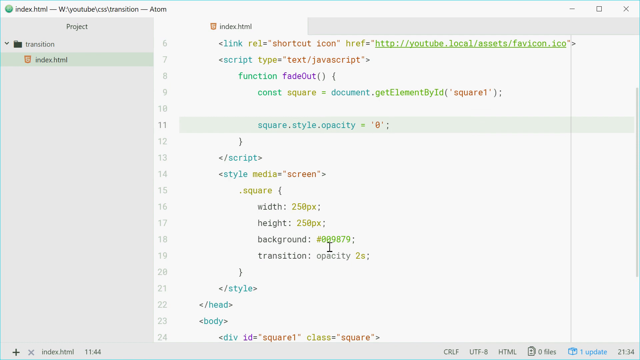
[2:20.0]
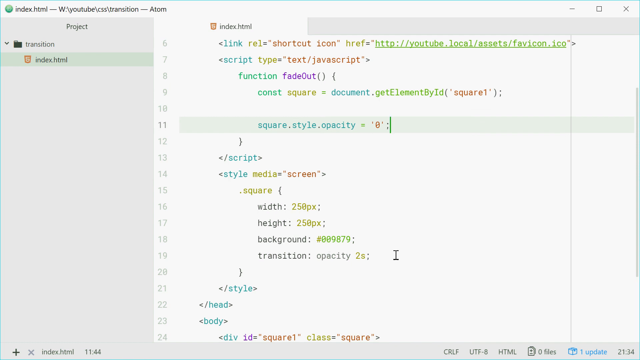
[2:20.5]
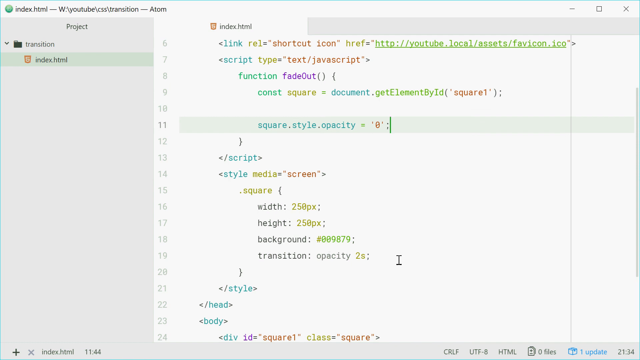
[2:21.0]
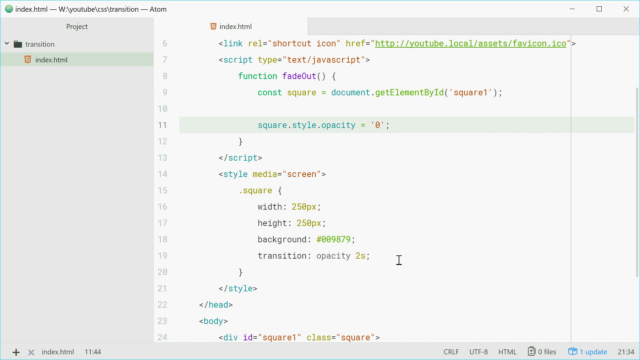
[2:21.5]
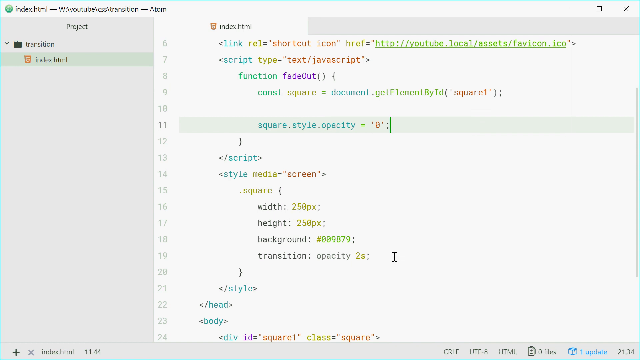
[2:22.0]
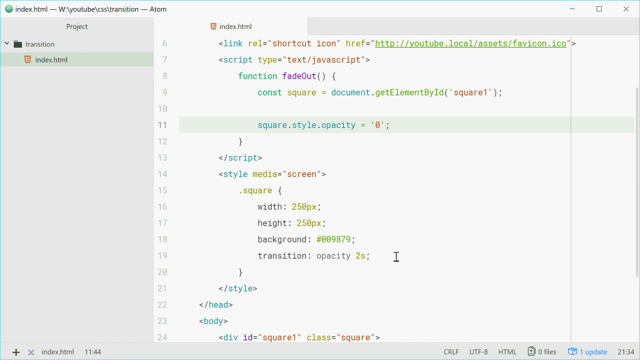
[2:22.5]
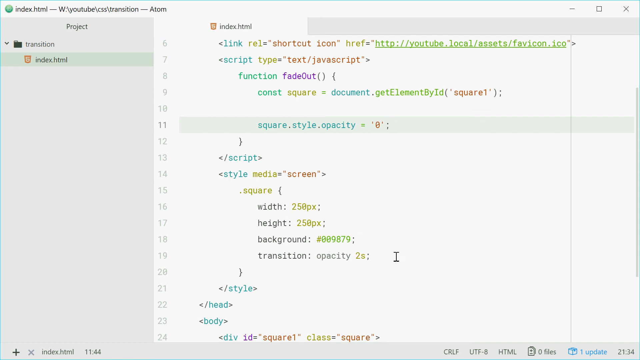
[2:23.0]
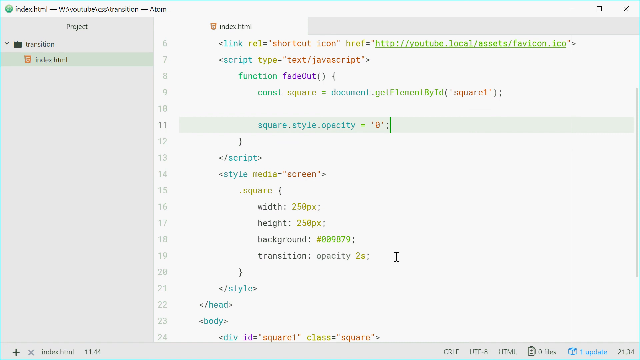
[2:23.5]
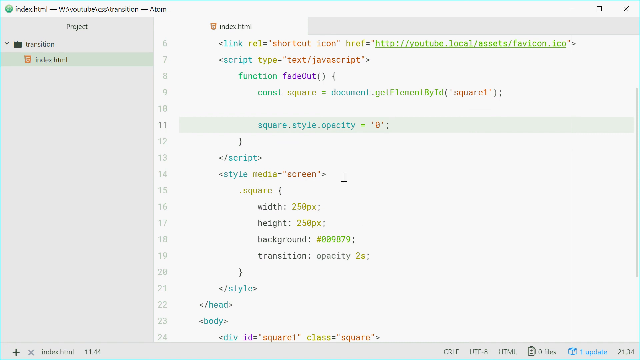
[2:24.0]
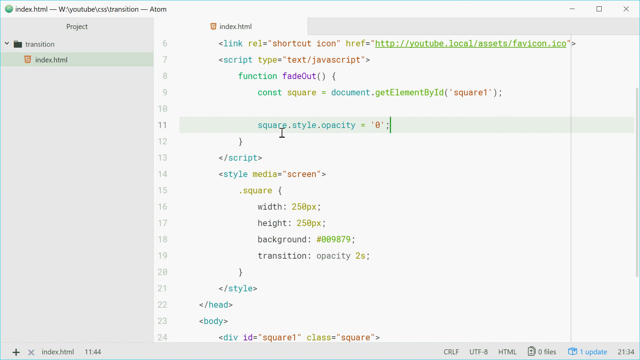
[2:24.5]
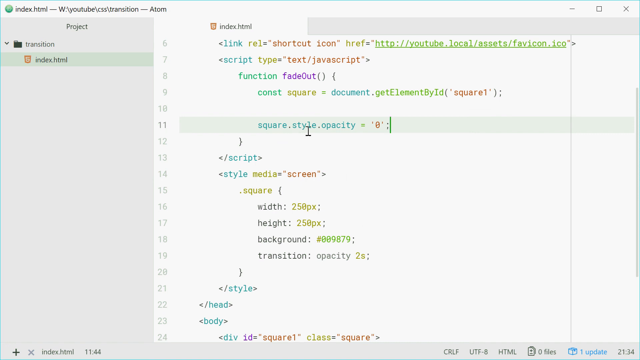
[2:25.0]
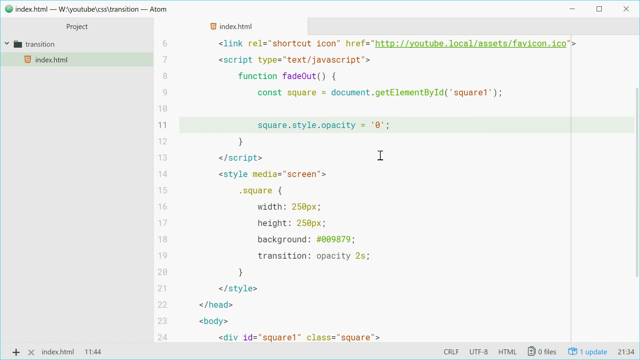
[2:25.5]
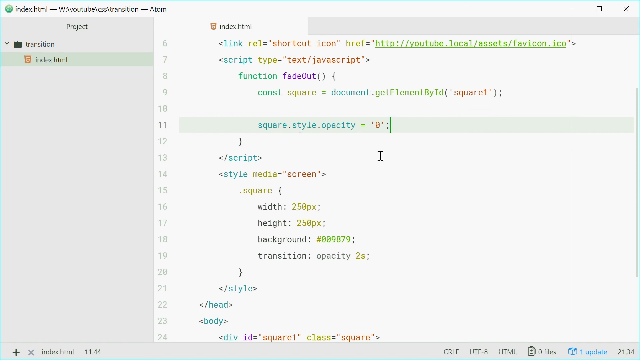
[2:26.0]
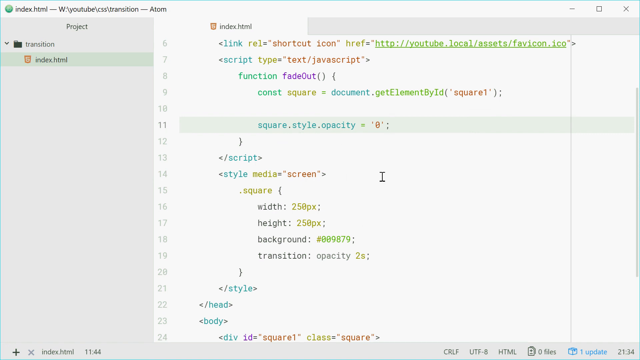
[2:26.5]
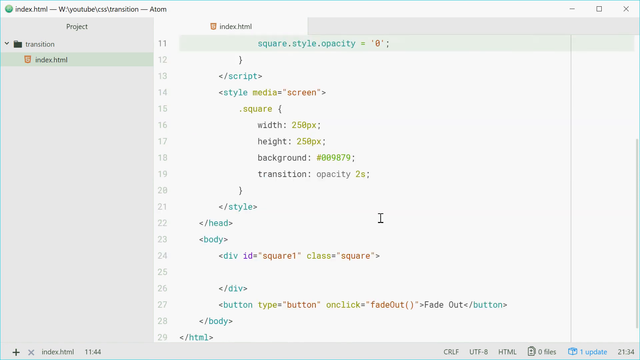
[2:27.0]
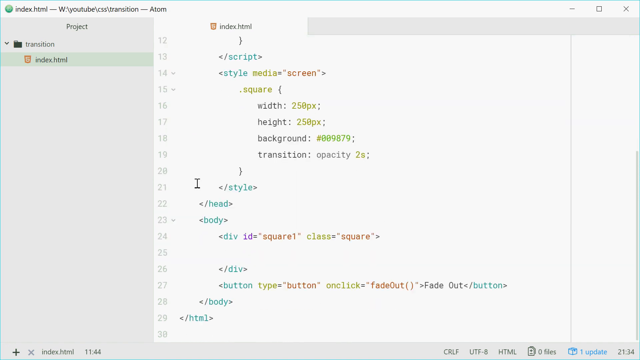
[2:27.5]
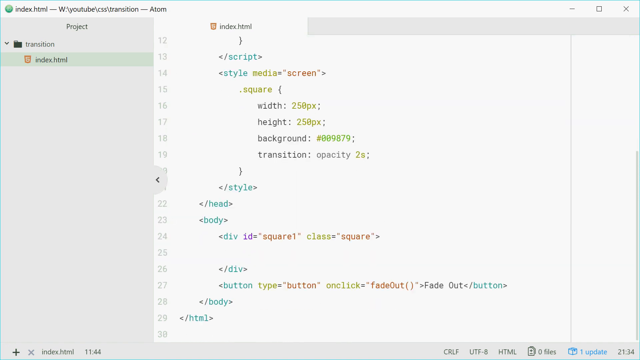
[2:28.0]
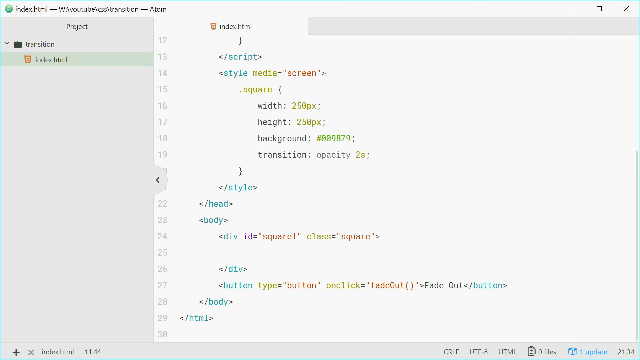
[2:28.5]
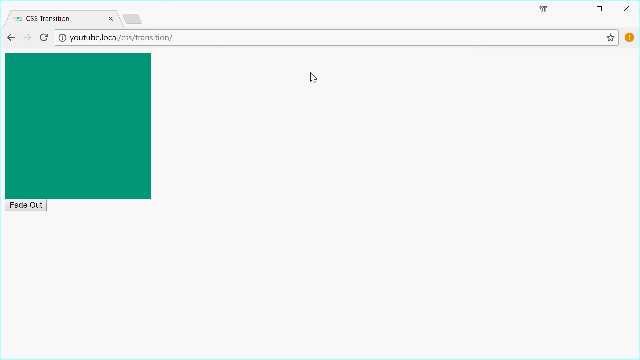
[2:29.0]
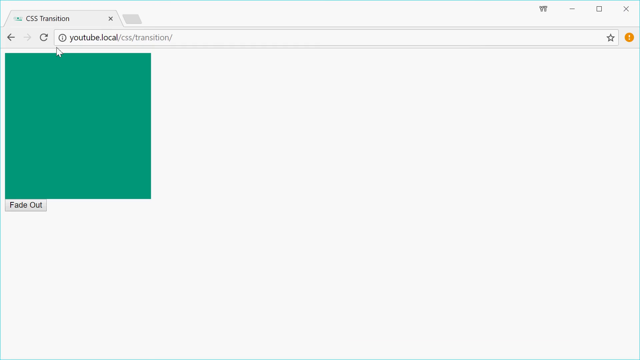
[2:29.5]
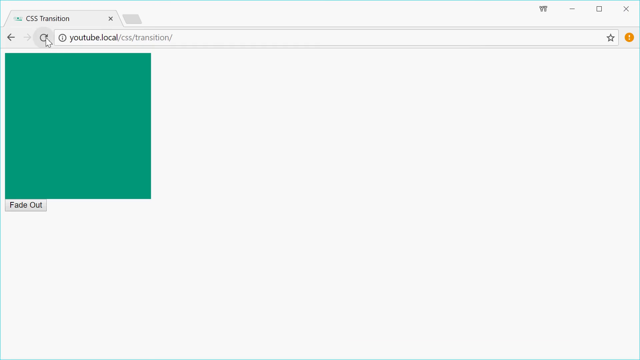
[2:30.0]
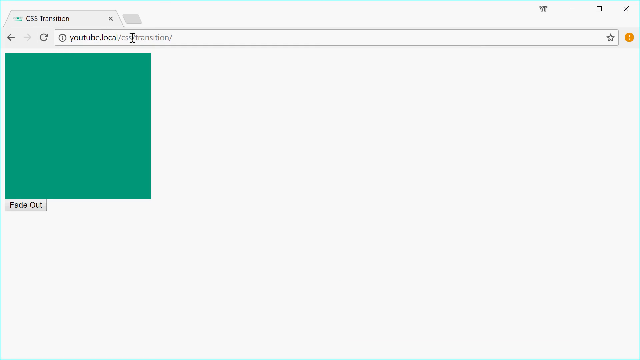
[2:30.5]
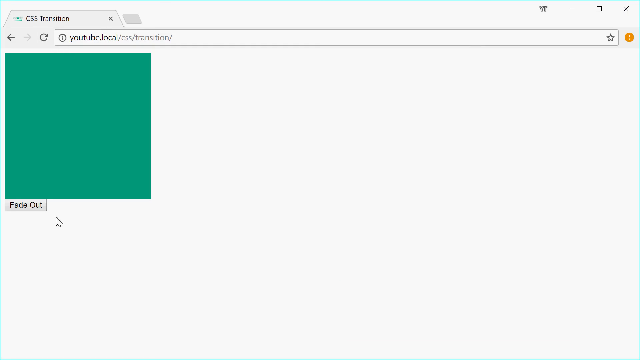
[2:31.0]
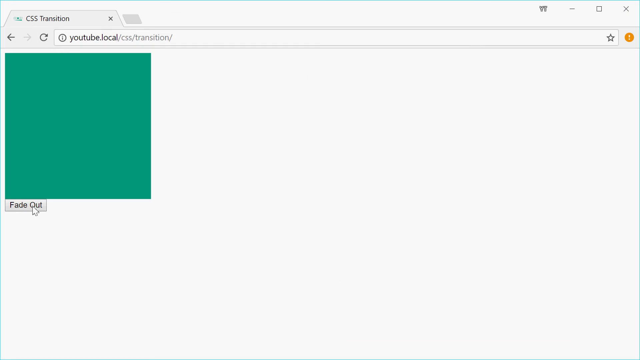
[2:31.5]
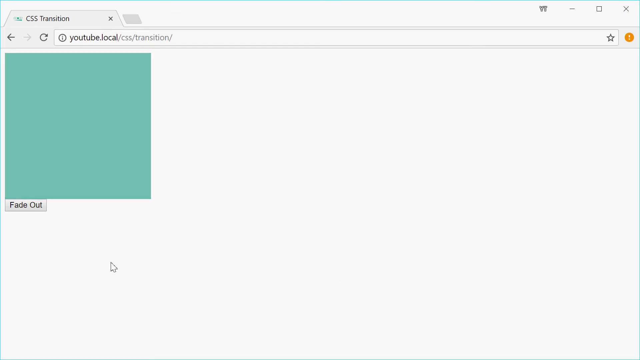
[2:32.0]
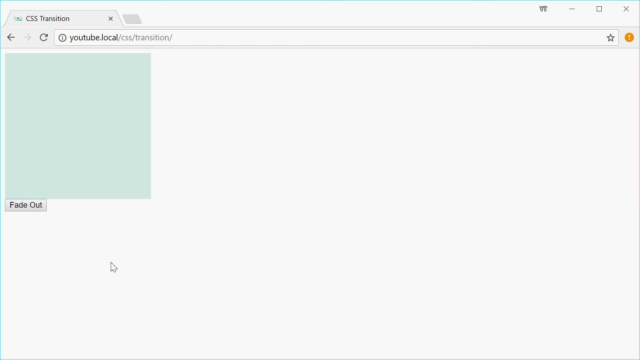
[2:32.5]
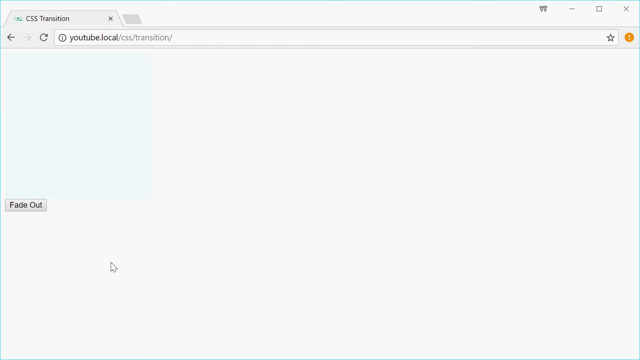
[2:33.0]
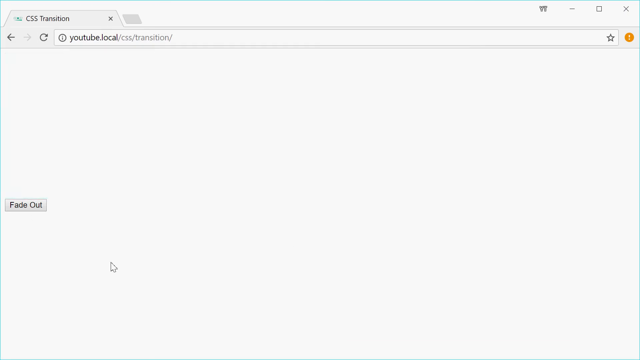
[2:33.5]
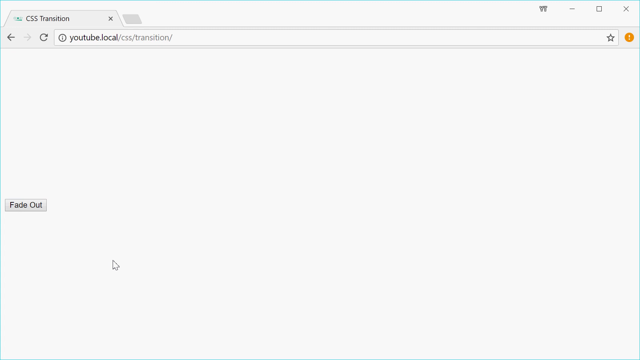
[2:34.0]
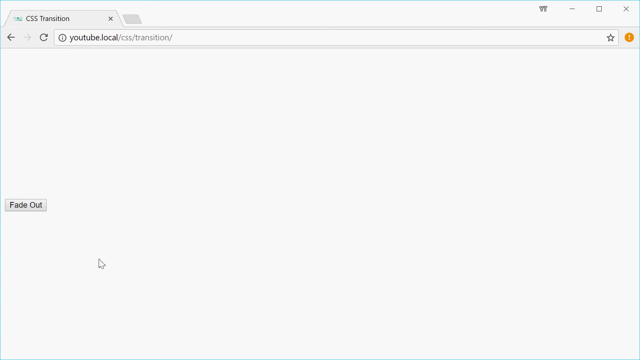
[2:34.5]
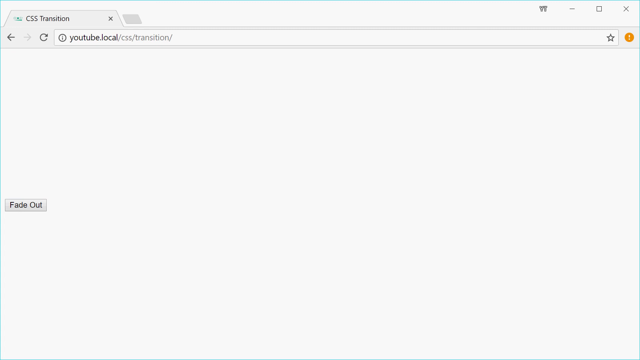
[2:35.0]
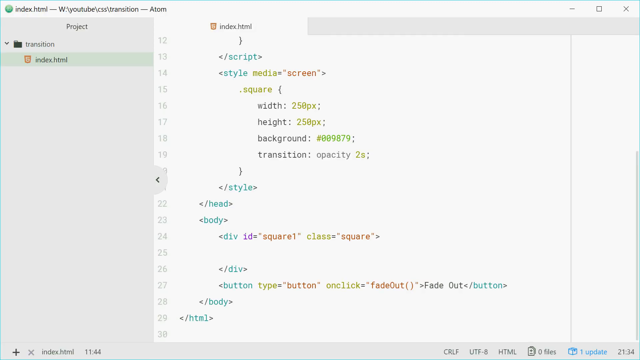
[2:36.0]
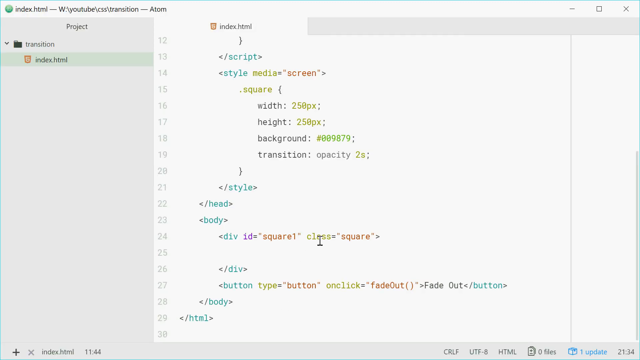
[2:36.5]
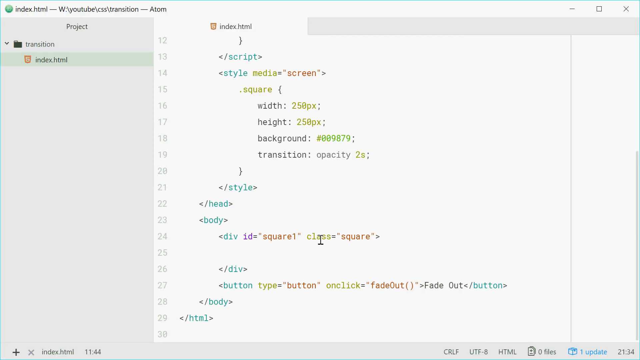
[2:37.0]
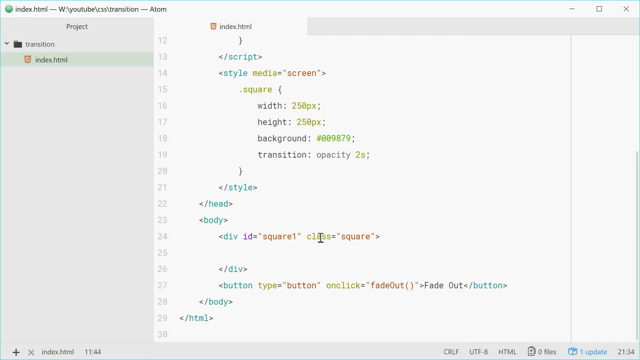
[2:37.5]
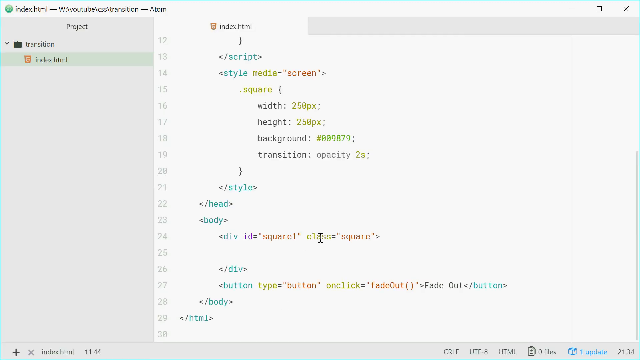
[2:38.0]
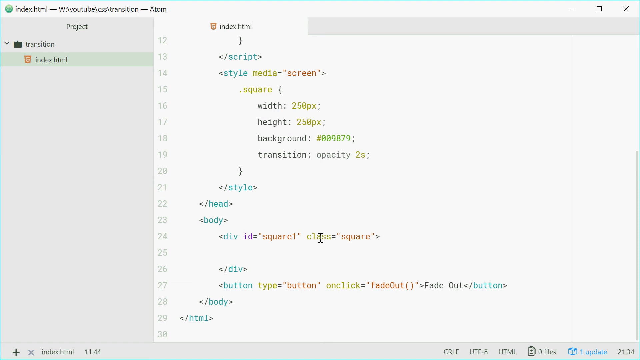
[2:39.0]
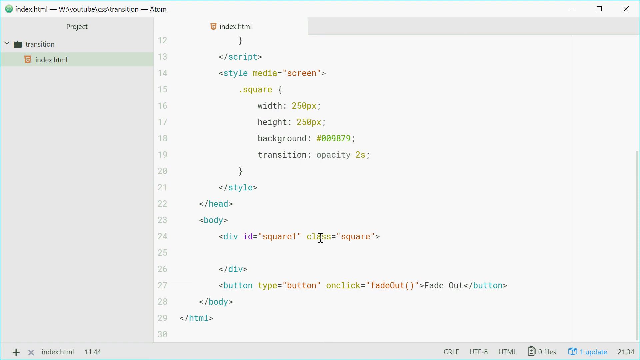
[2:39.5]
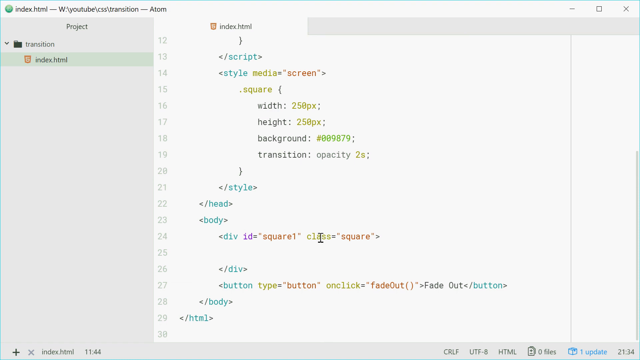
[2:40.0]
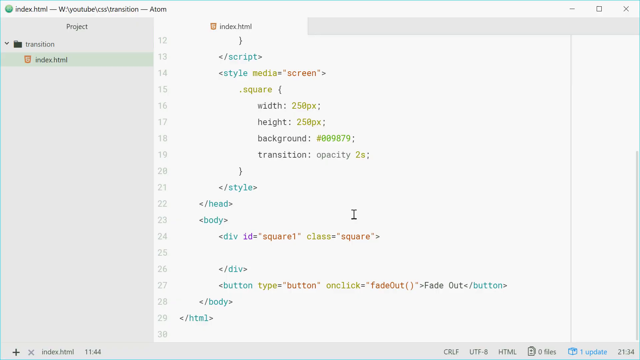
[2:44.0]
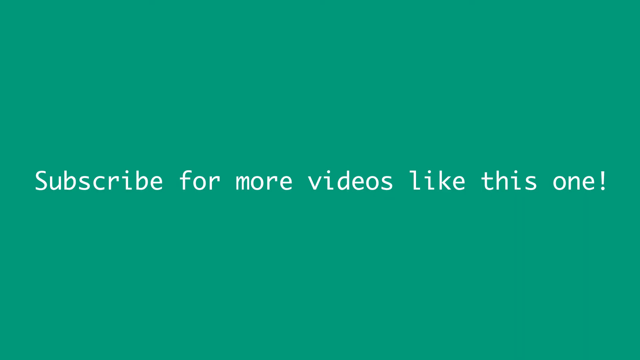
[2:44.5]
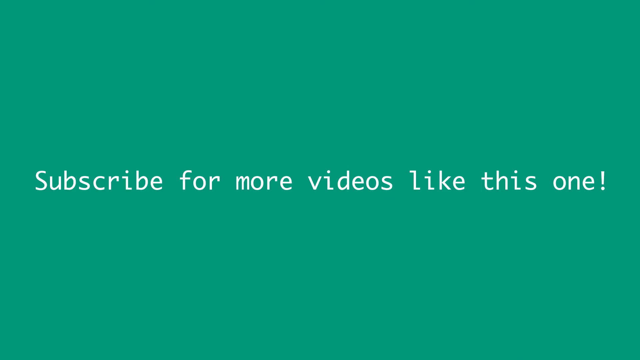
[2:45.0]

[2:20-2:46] The index.html page is open, with the project column and line numbers on the left and the code on the right. The man is still editing, scrolls through the code, shows the style section, and refreshes the page. He presses fade out, and the green box fades out. He goes back to the code, and it seems the code has worked. Before the video ends, a green tab shows the same green box from the start of the video, now with the text "subscribe for more videos like this one".